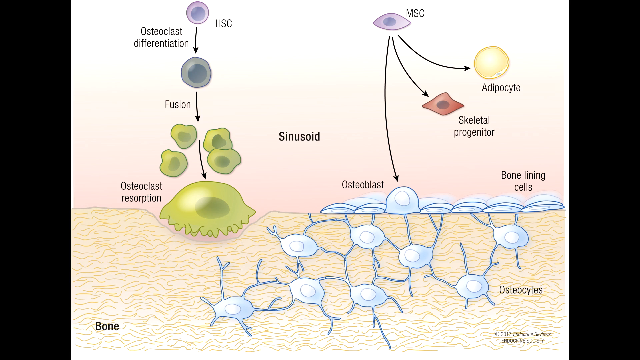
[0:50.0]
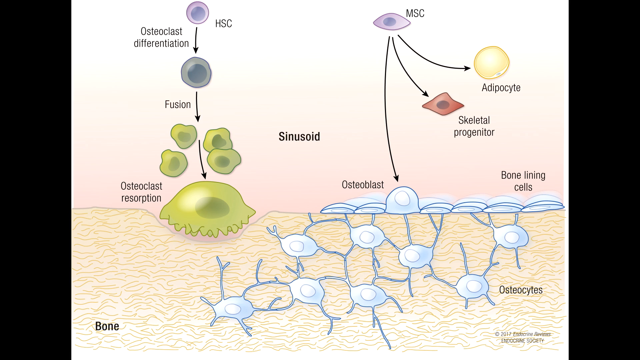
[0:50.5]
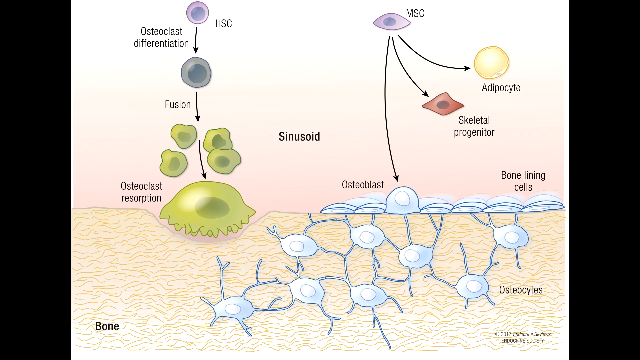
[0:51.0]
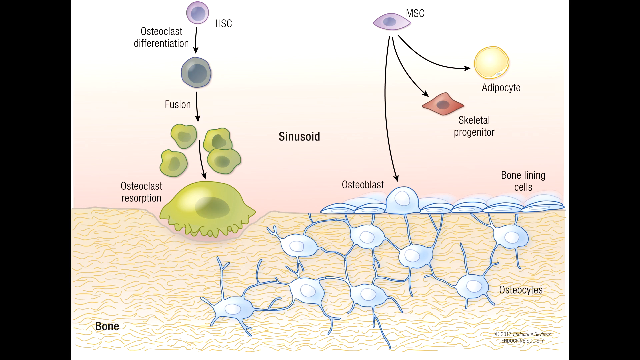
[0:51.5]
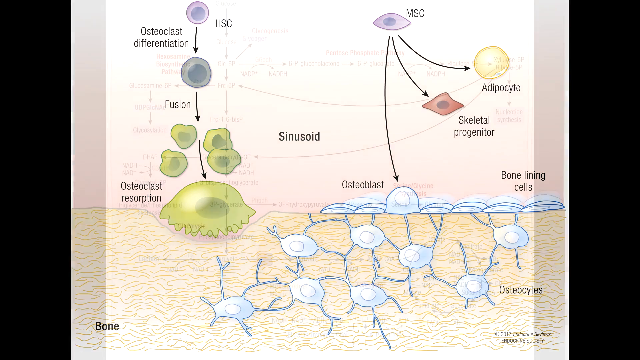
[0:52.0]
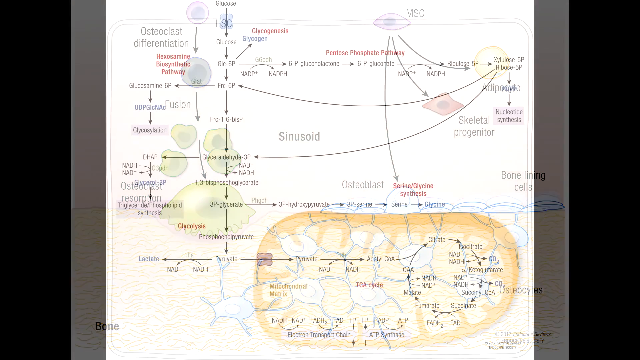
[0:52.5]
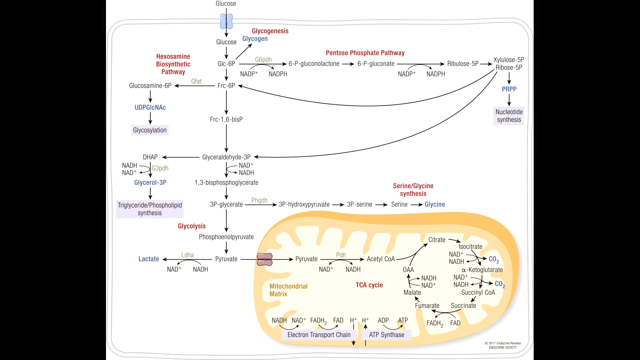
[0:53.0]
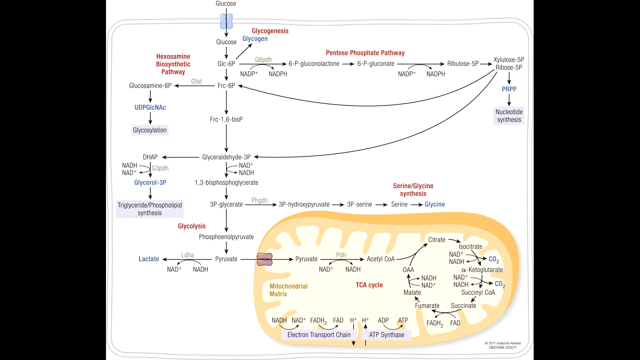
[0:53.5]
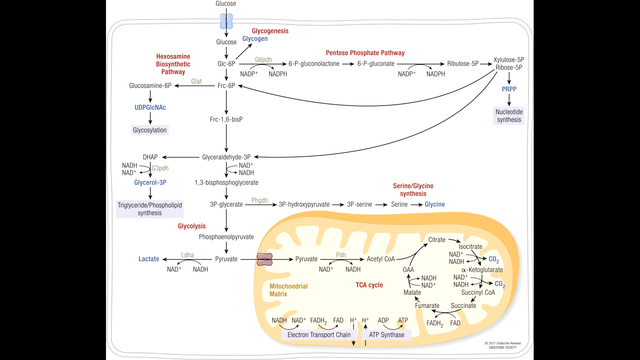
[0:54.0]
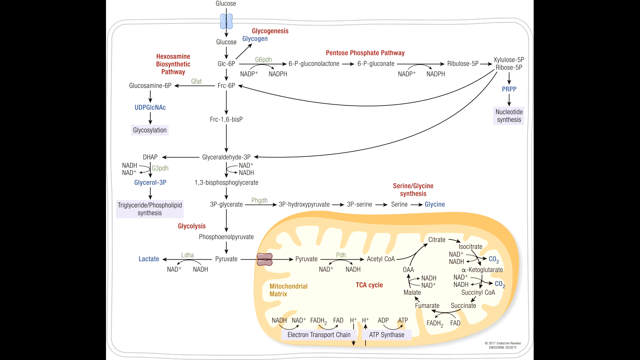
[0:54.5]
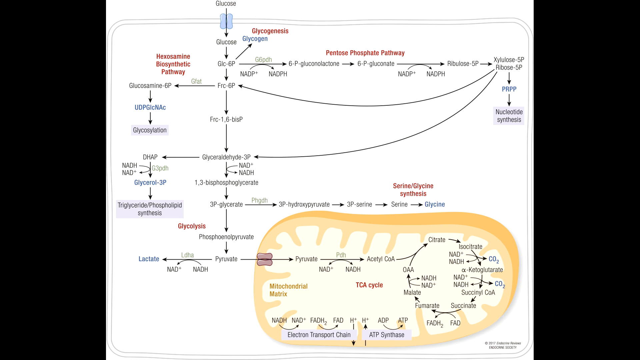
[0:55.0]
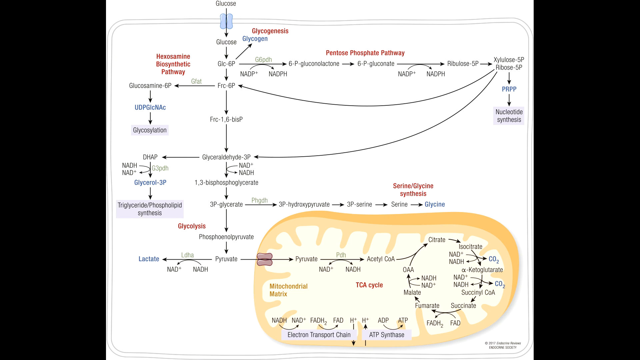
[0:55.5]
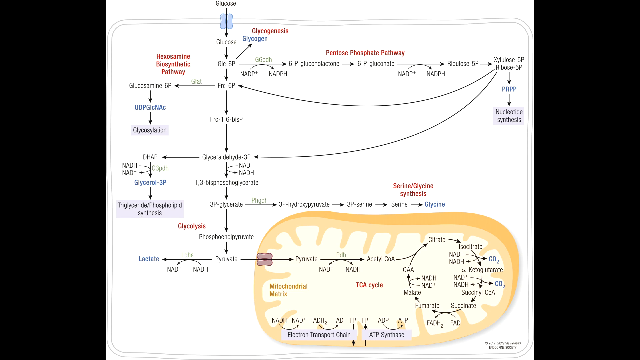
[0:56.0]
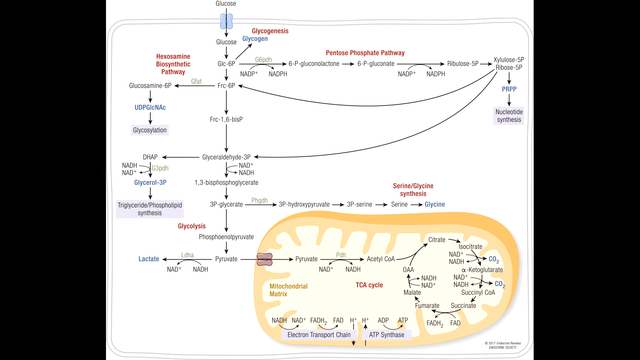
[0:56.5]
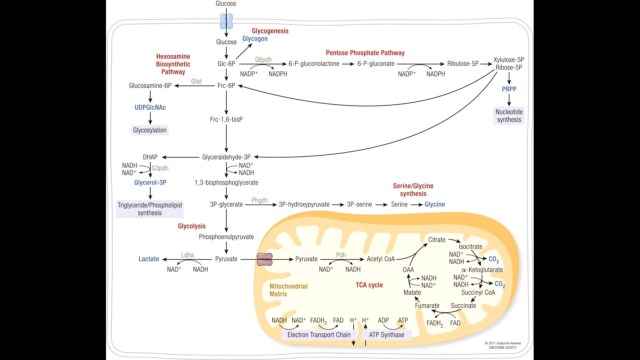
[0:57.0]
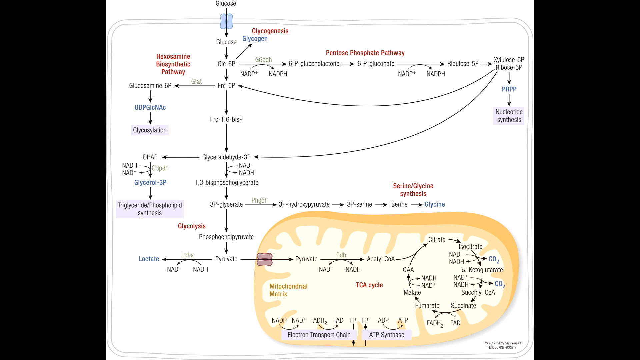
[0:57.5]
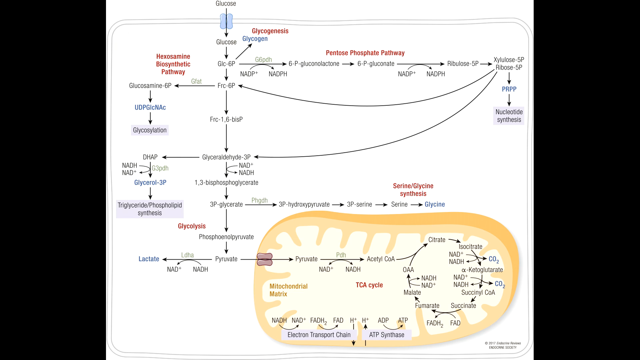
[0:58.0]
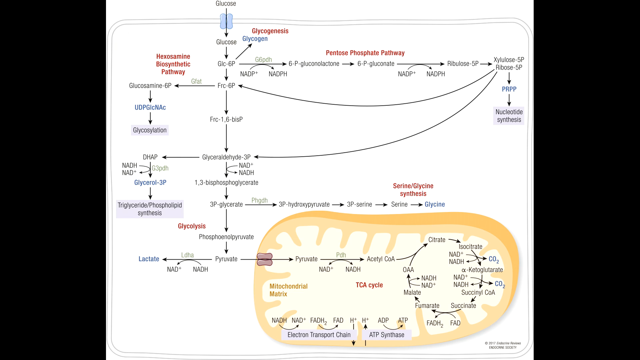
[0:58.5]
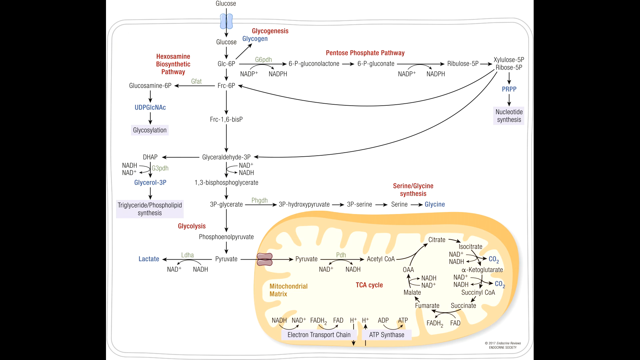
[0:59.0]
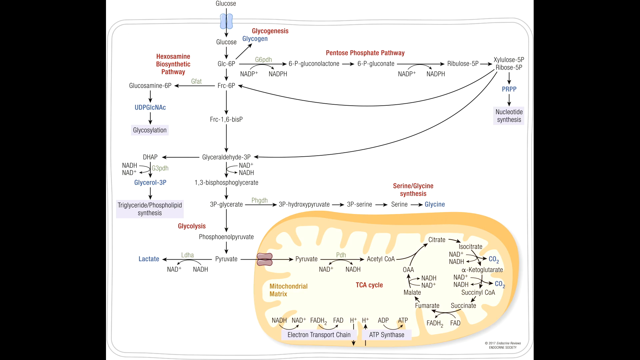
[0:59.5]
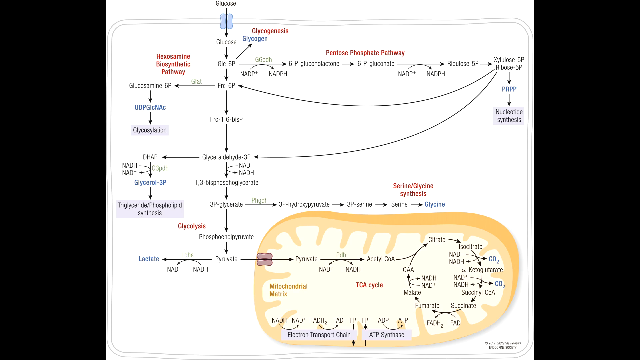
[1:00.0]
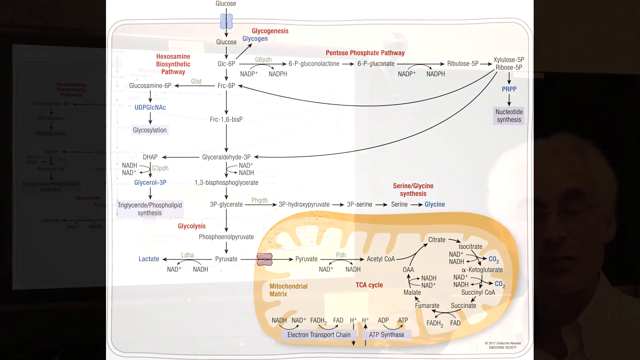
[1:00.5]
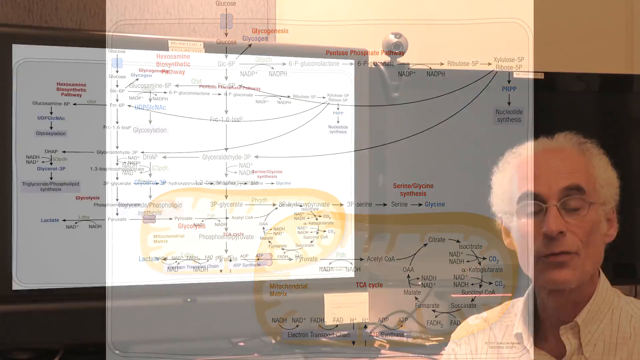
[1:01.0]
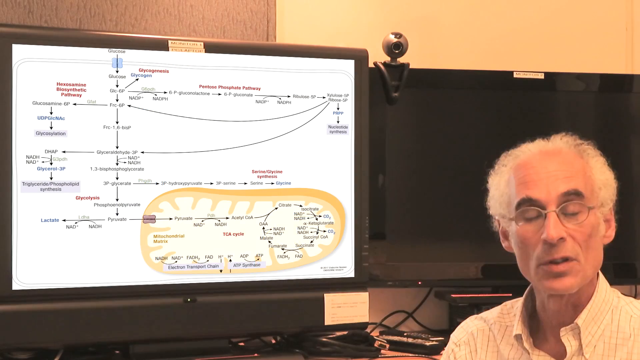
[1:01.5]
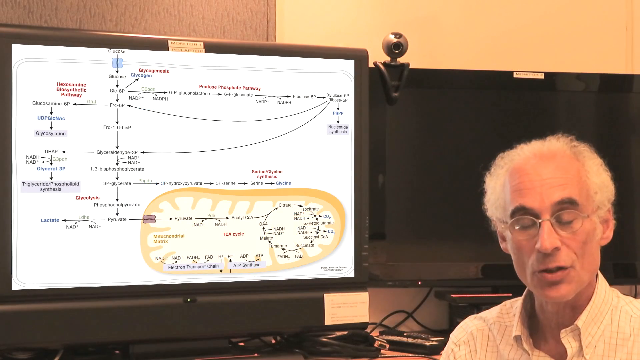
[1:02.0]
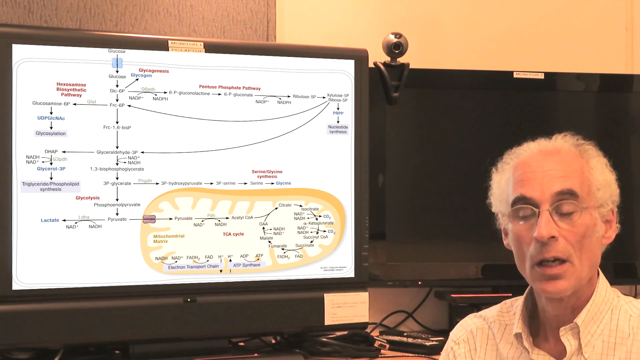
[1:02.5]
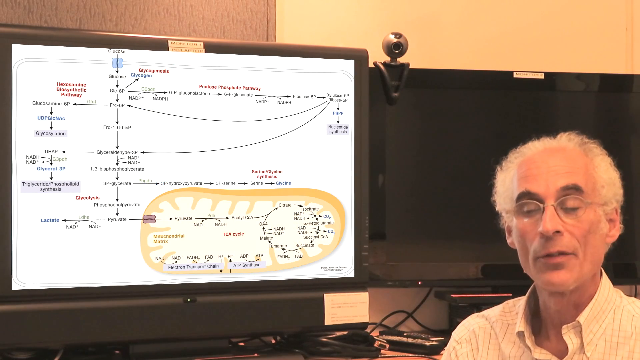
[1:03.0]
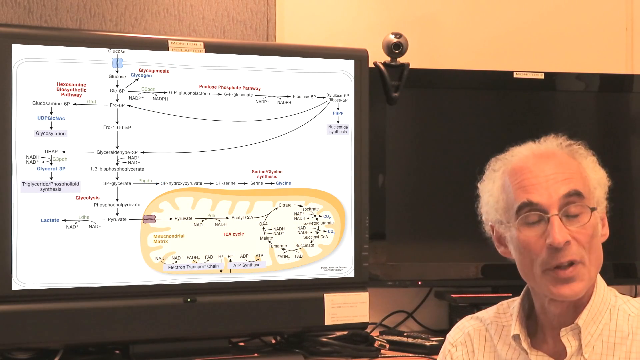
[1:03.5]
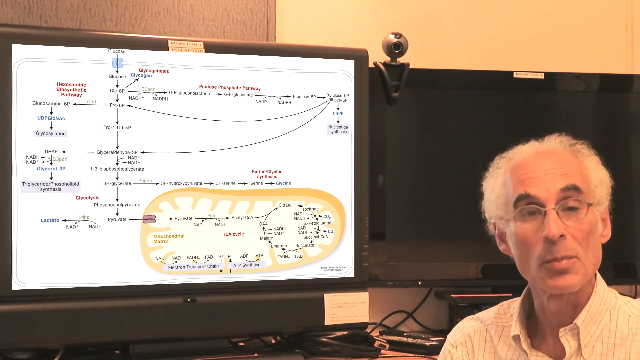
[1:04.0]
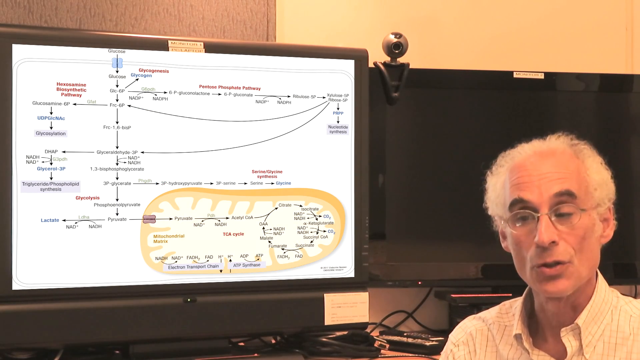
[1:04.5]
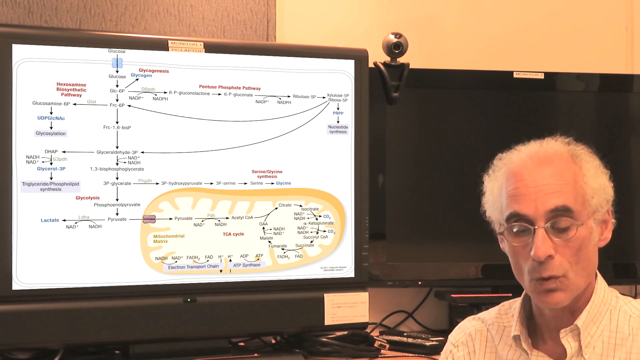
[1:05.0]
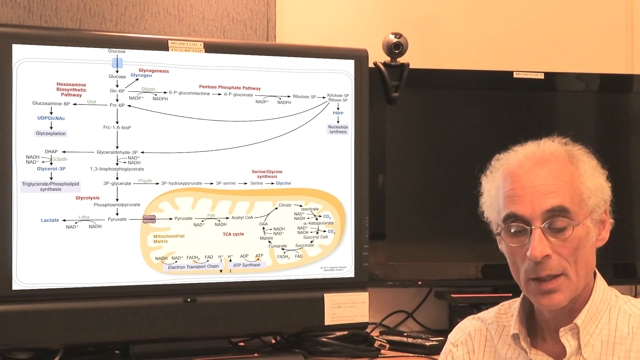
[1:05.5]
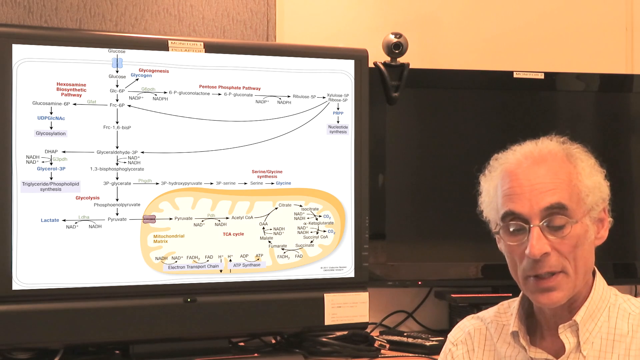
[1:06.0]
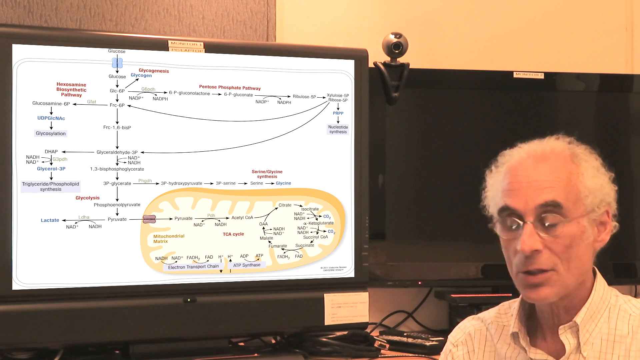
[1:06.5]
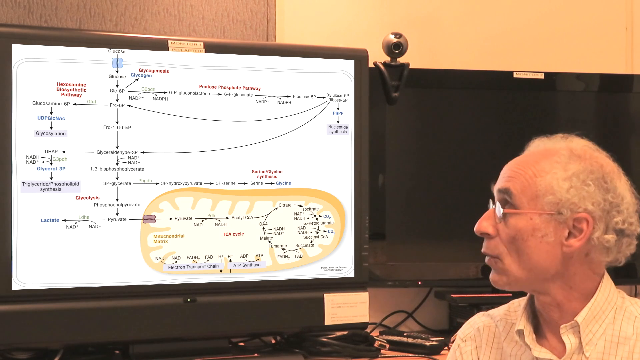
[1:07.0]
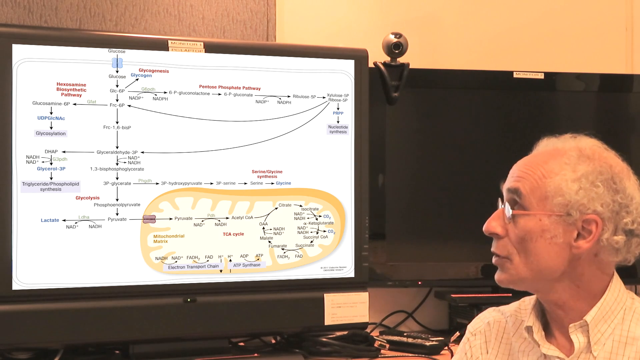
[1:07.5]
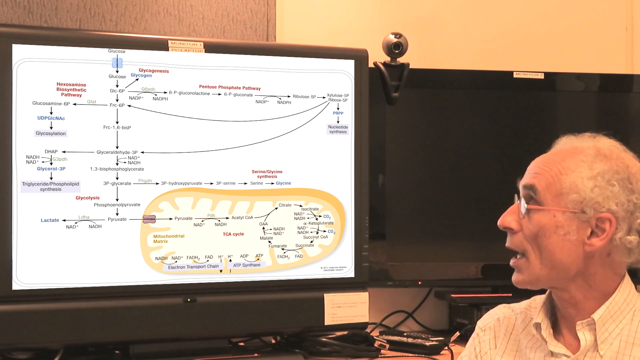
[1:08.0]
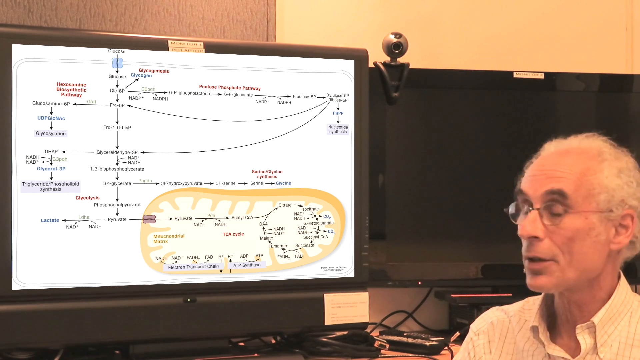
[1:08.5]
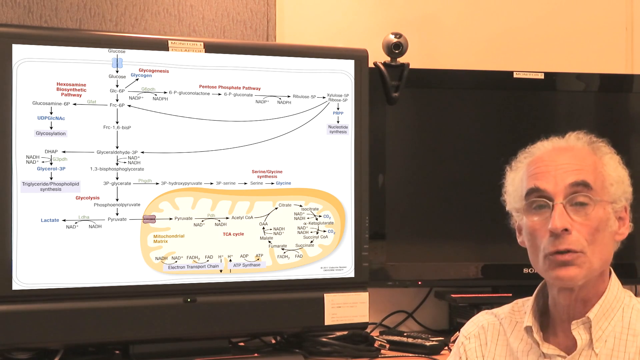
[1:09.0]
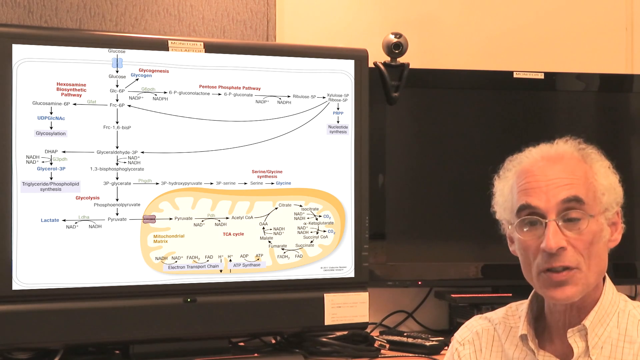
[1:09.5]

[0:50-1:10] The screen of what might be a computer monitor shows a very detailed medical pathway. In red text are the words "hexosamine biosynthetic pathway", to the right of that "glycogenesis", and to the right of that "pentose phosphate pathway". Many letters form a flow chart that runs downward, breaks off to the left and to the right, and then continues downward again. Some type of synthesis continues downward and ends in what looks like an almost oval-shaped yellow object in the lower right of the screen. Inside the yellow object, which has a white interior, red text says "TCA cycle", and on the left yellow text reads "mitochondrial matrix". The view then goes back to the professor or doctor, who is still talking, his head slowly moving up and down and his eyes closed again as he speaks, facing forward.